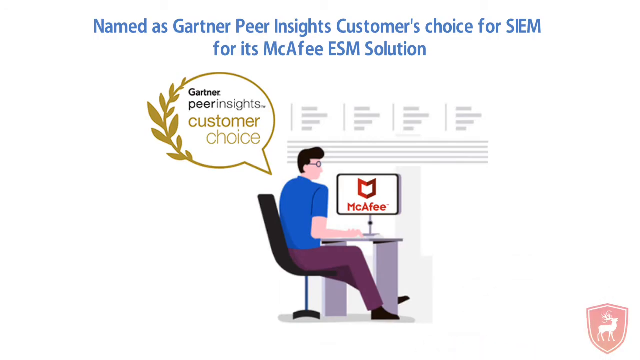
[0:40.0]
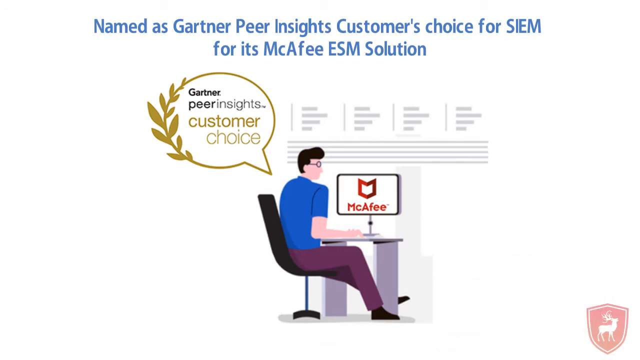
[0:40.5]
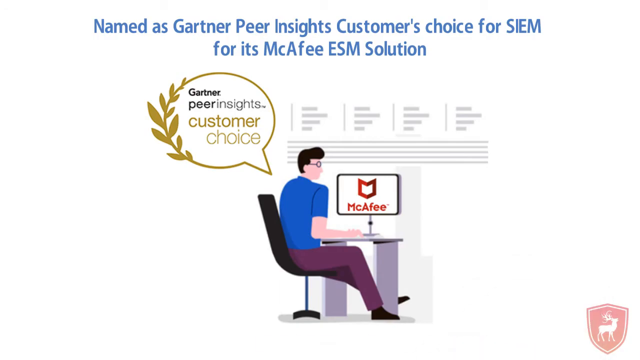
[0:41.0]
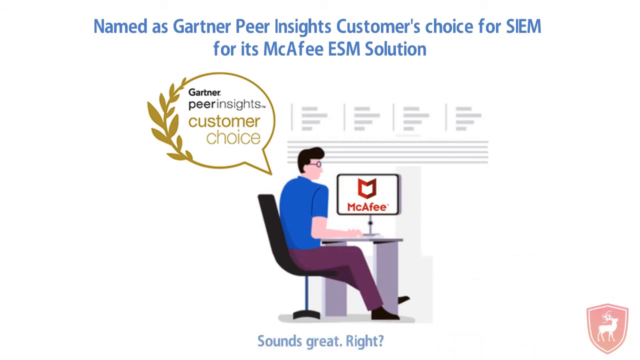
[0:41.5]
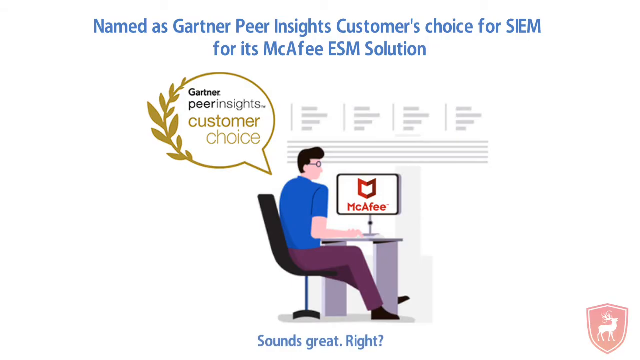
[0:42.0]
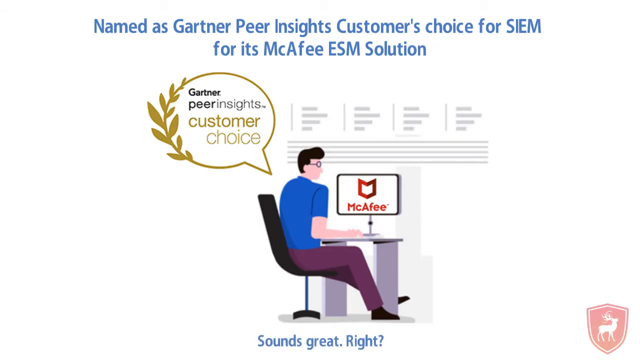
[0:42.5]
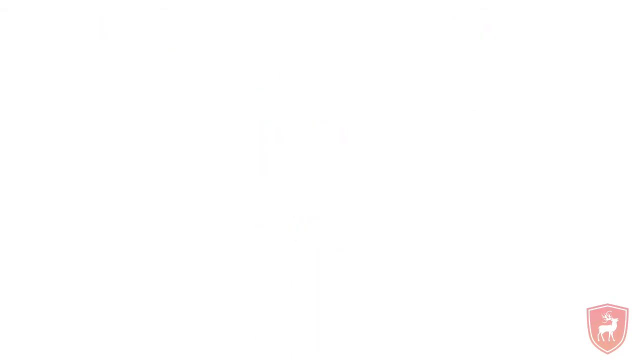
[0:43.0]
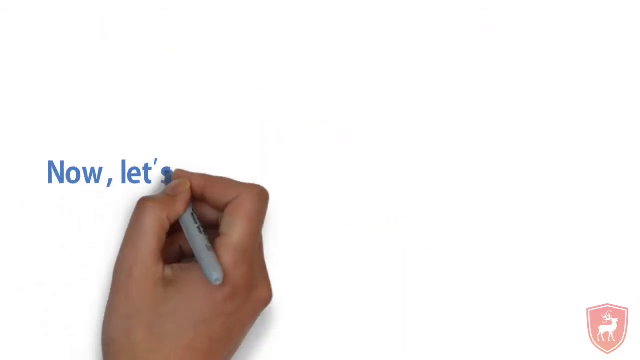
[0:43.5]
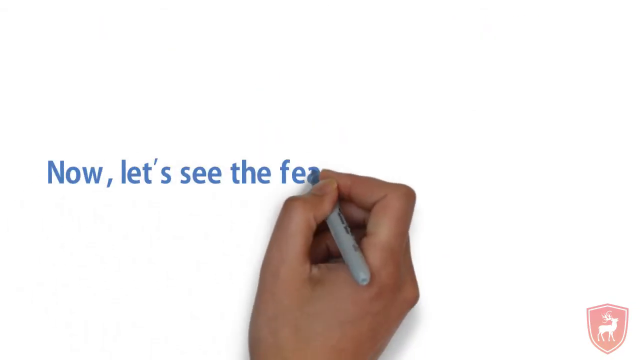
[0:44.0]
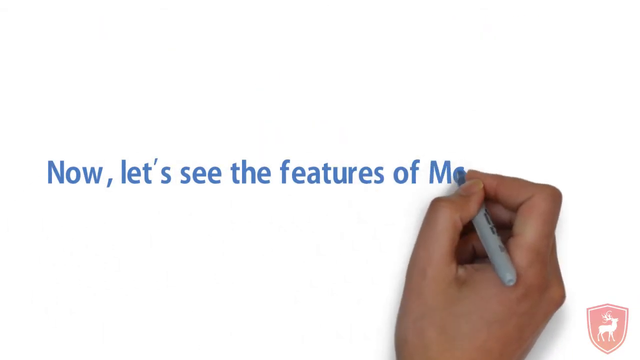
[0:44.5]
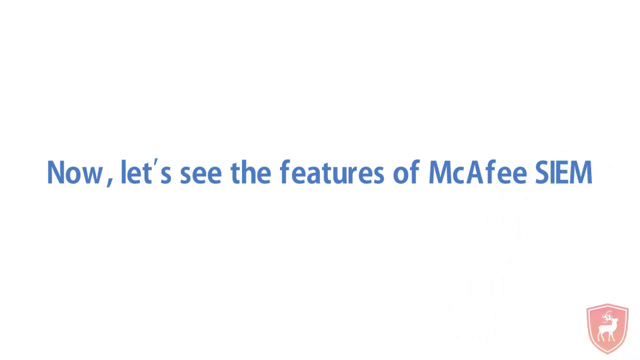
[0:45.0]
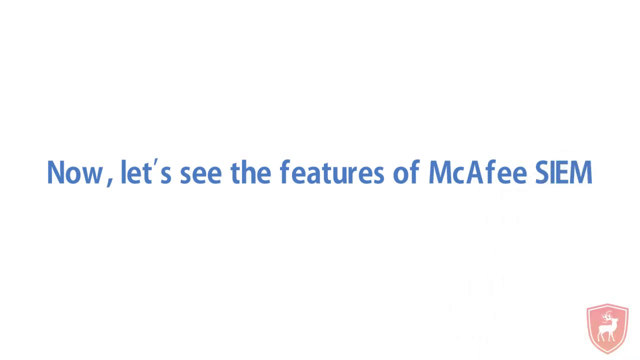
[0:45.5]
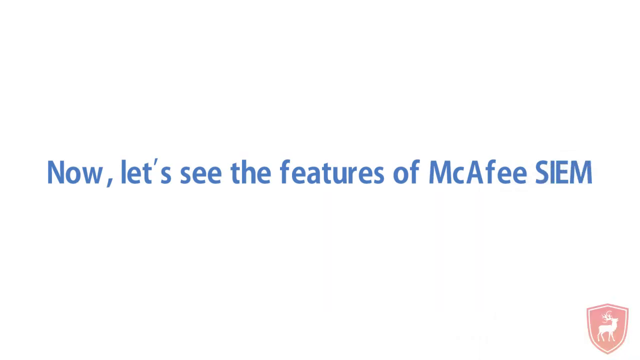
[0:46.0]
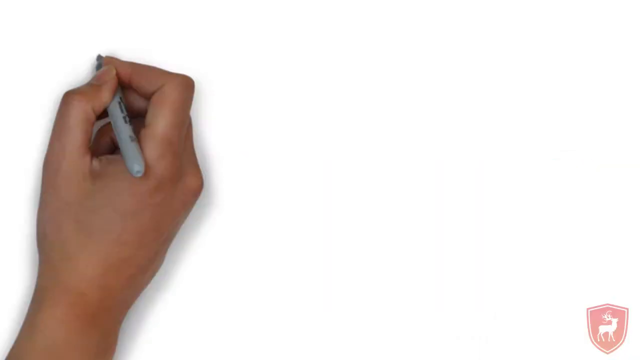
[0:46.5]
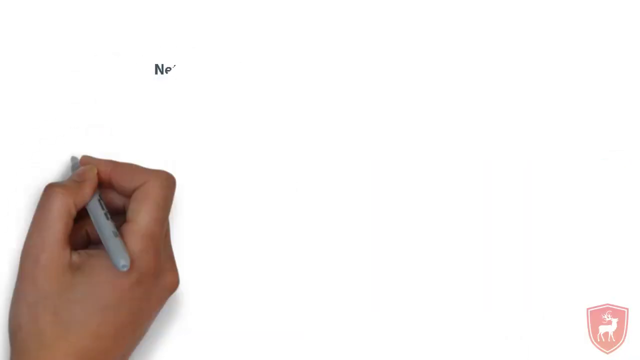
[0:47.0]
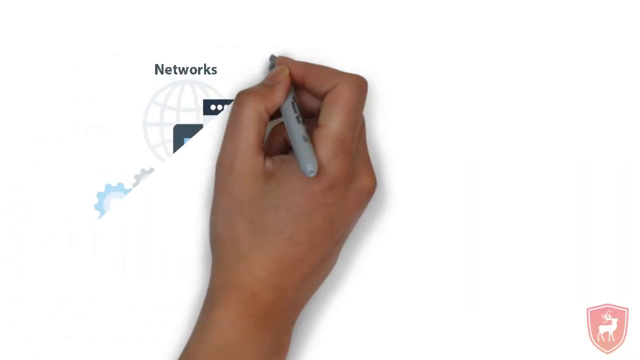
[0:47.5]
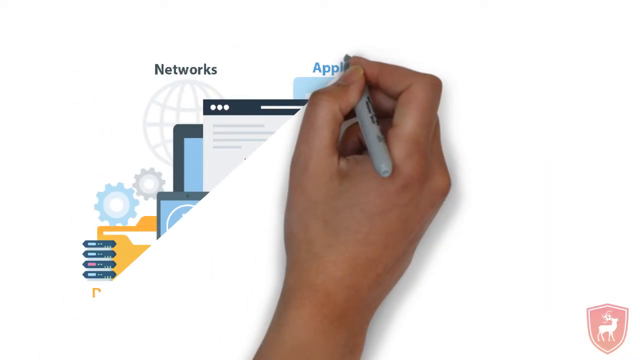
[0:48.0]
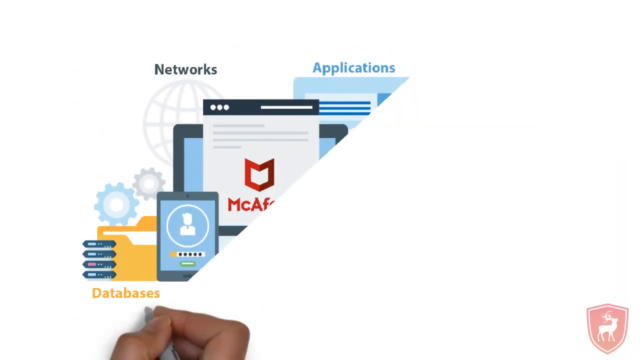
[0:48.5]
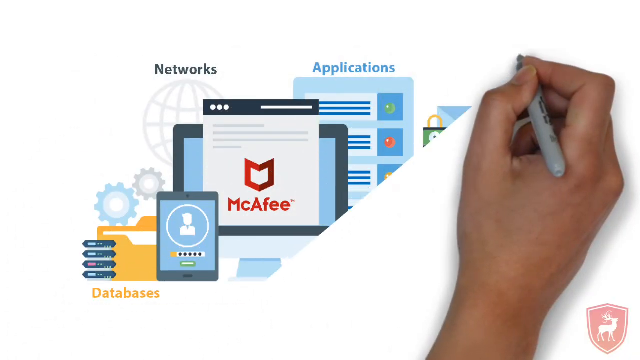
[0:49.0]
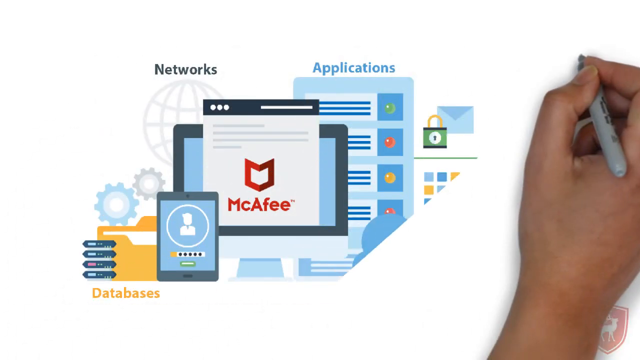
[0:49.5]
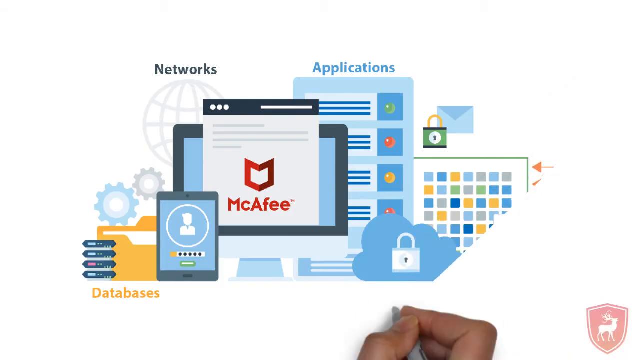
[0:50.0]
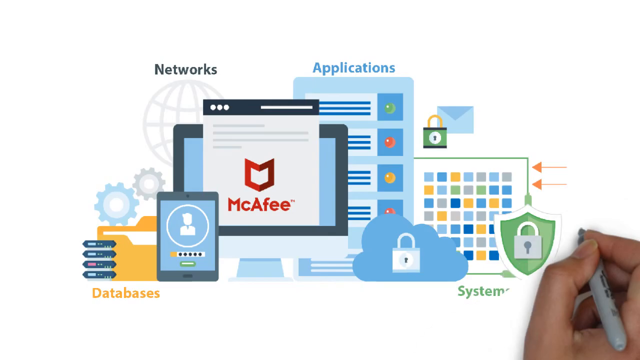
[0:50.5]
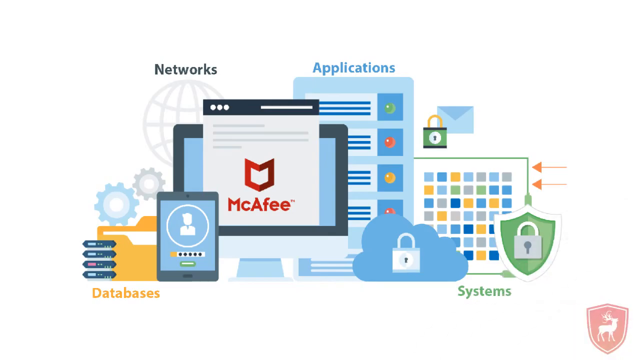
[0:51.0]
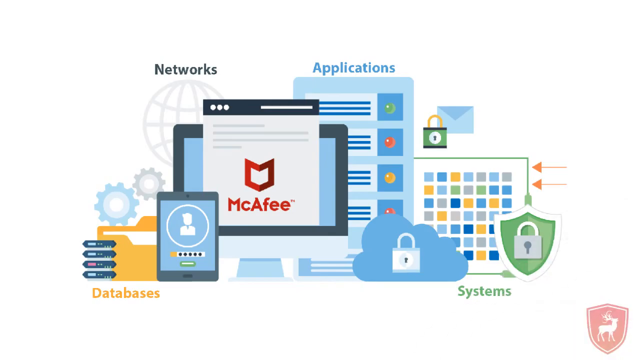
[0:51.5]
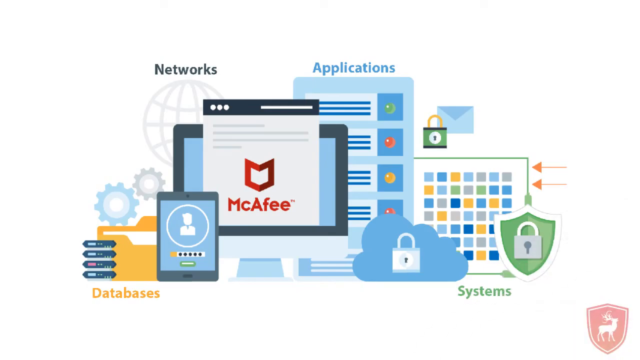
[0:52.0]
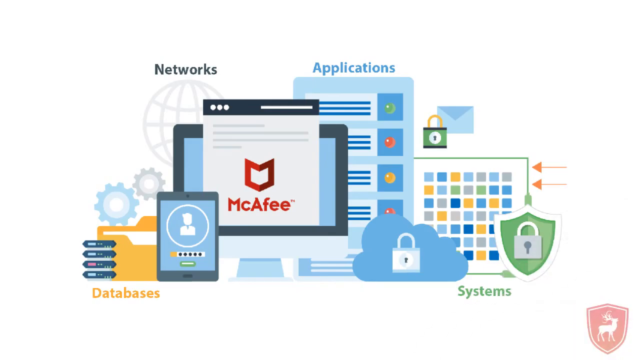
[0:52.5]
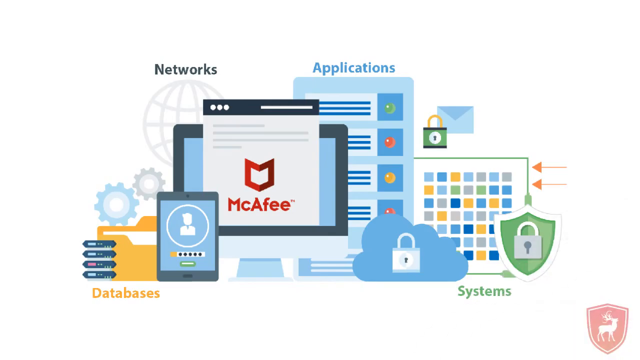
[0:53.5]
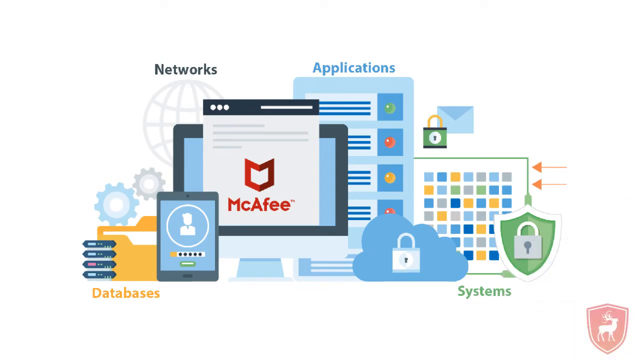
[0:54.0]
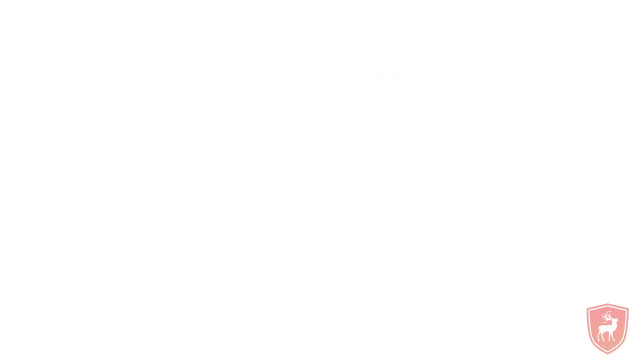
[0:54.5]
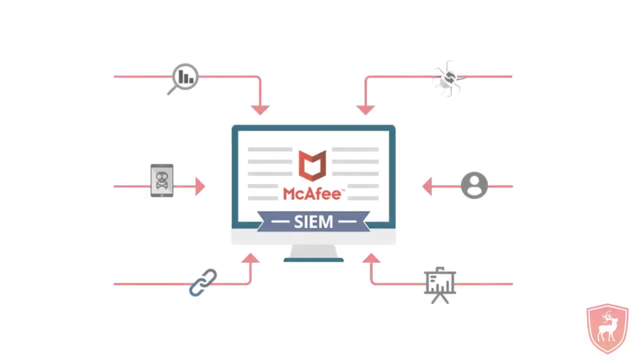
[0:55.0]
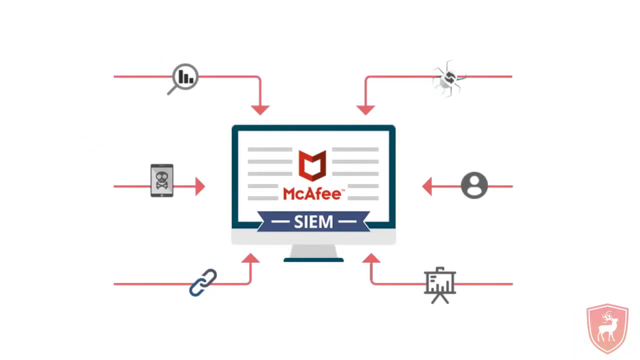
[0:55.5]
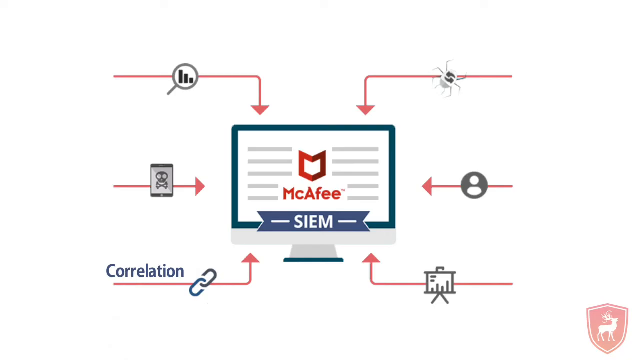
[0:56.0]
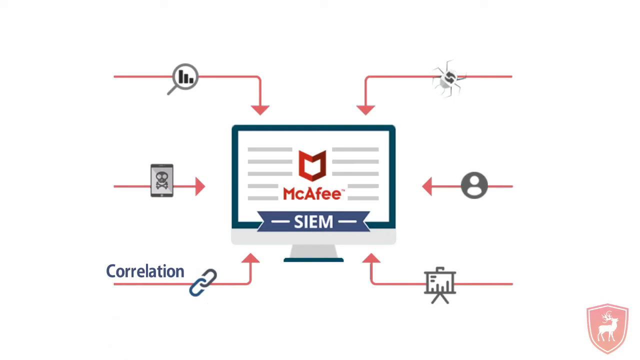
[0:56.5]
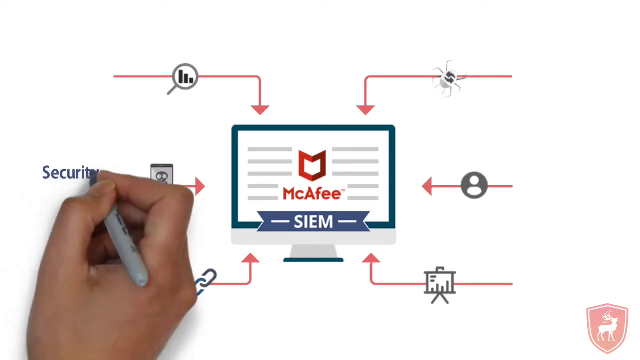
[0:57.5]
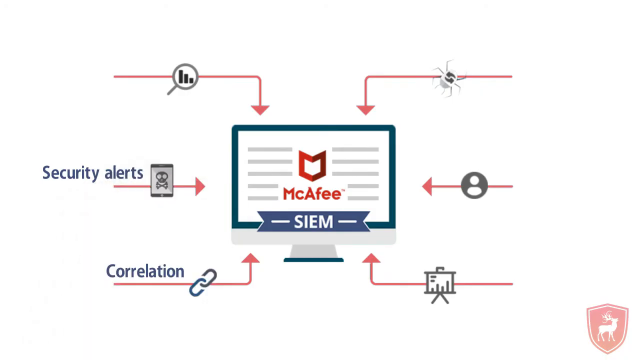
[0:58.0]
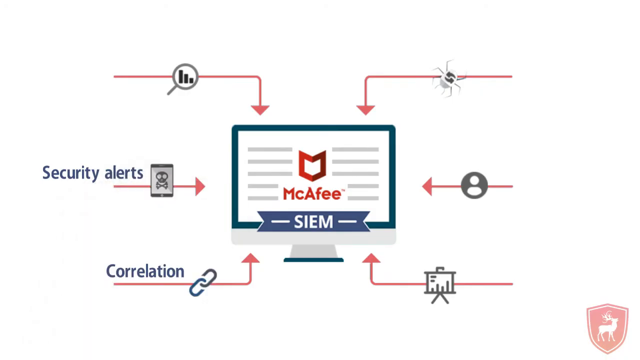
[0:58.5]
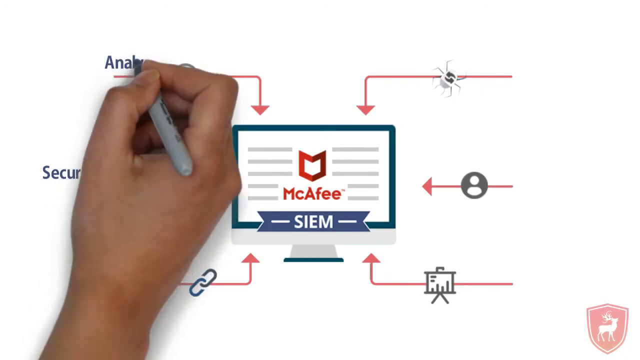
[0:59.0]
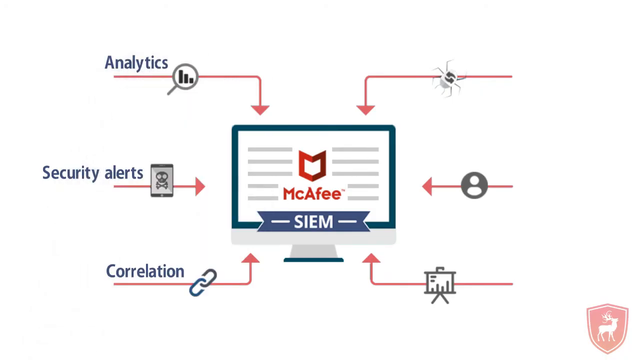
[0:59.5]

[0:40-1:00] The features of McAfee SIEM are listed: networks, applications, databases and systems, followed by correlation, security alerts and analytics before the list cuts off. A hand seems to be uncovering something from the page rather than drawing, though it is unclear whether it is a real hand.